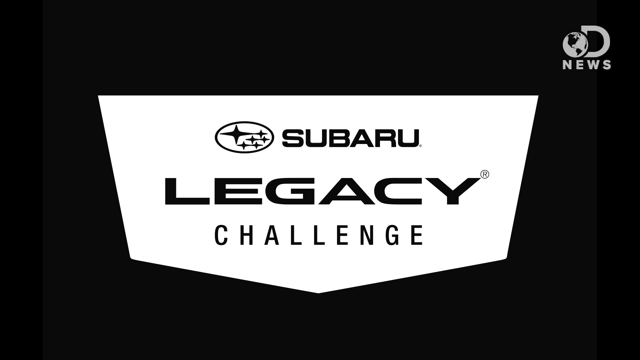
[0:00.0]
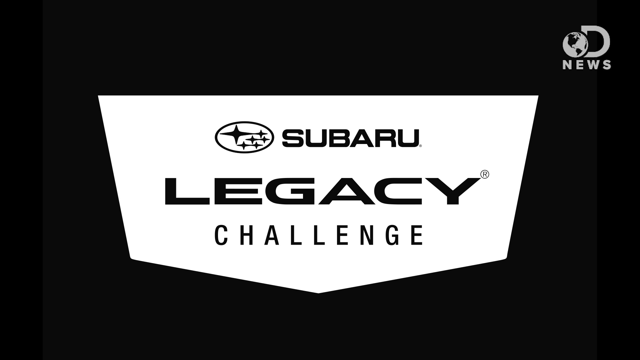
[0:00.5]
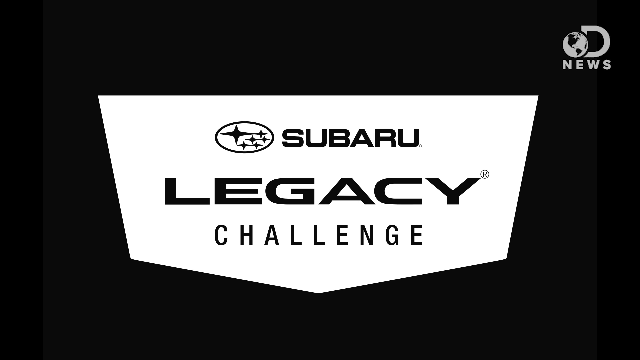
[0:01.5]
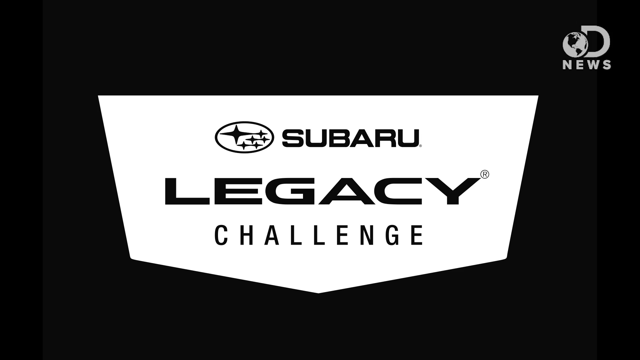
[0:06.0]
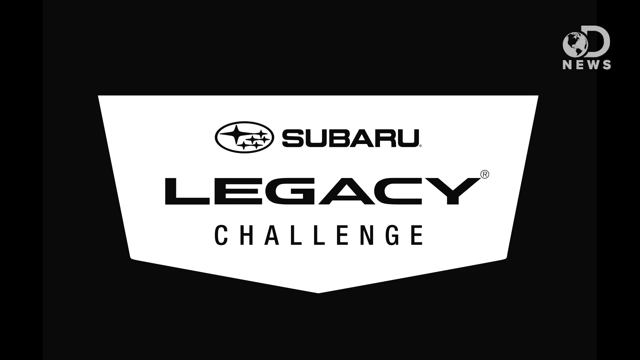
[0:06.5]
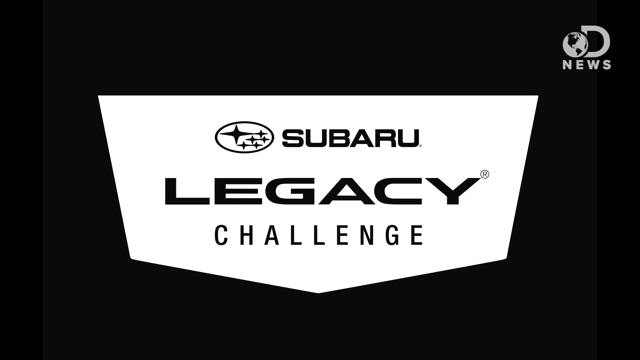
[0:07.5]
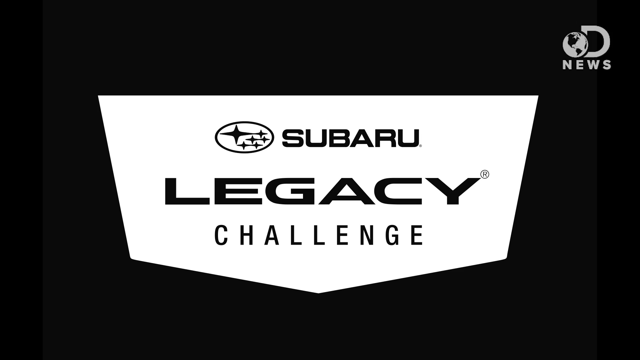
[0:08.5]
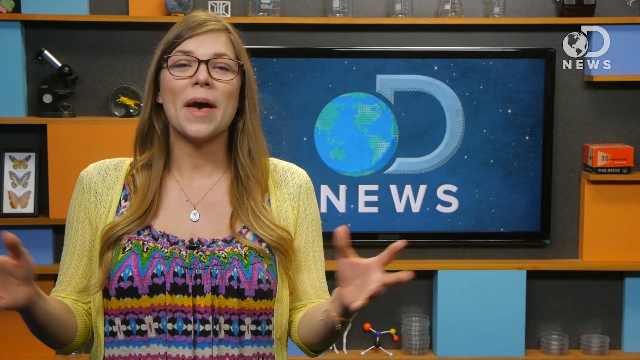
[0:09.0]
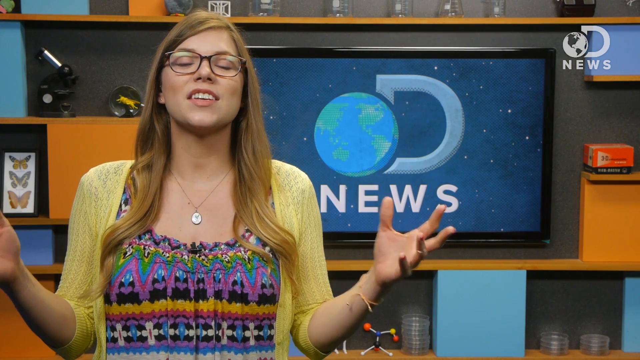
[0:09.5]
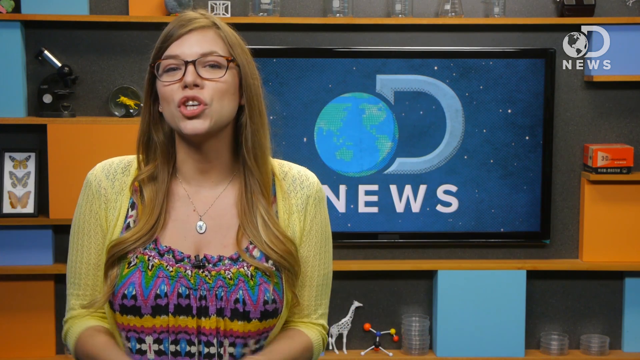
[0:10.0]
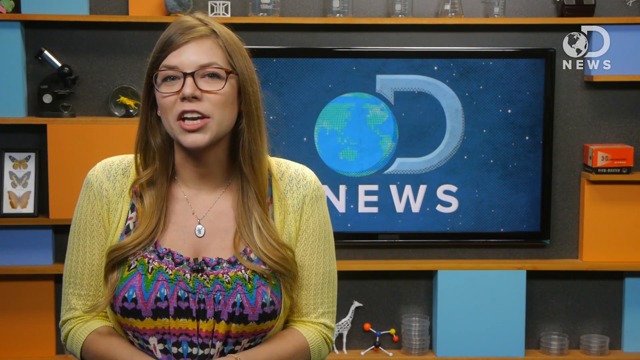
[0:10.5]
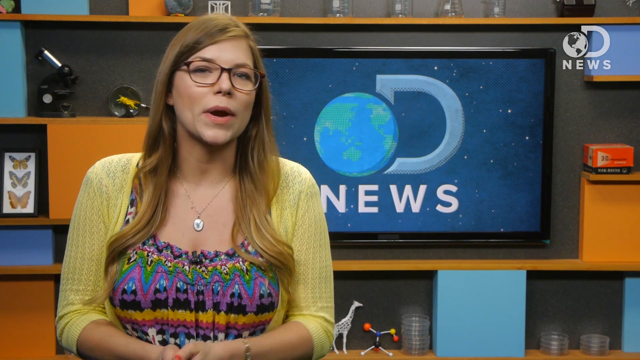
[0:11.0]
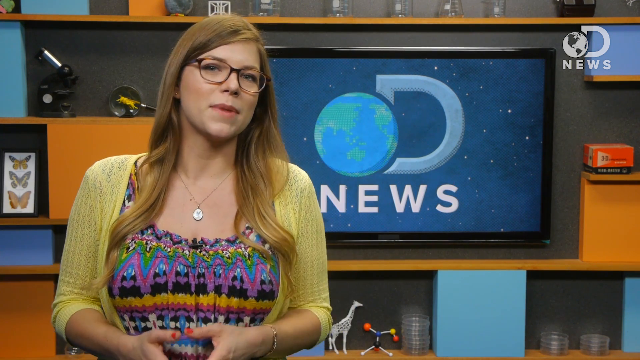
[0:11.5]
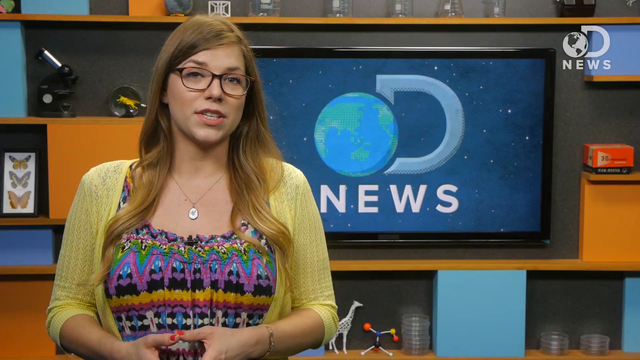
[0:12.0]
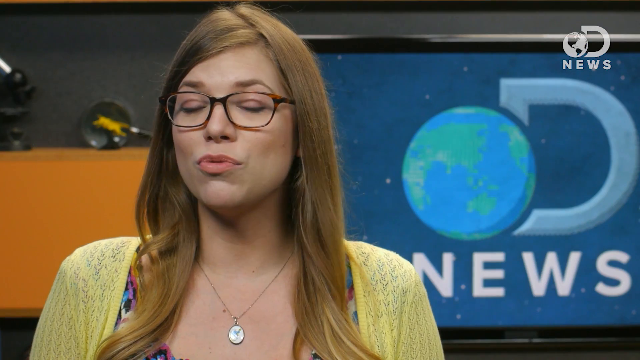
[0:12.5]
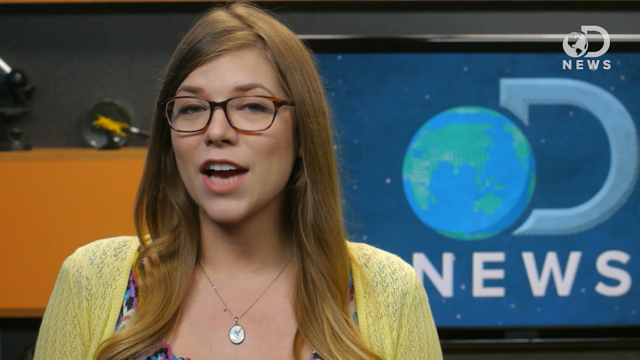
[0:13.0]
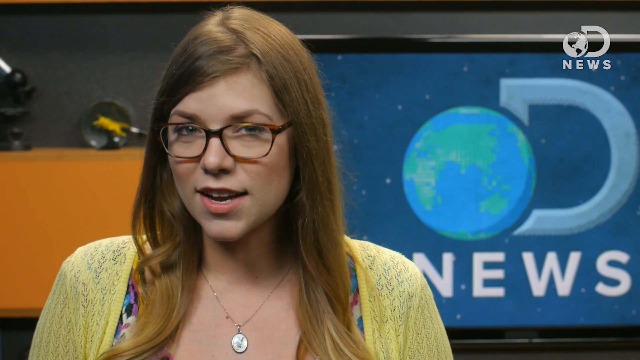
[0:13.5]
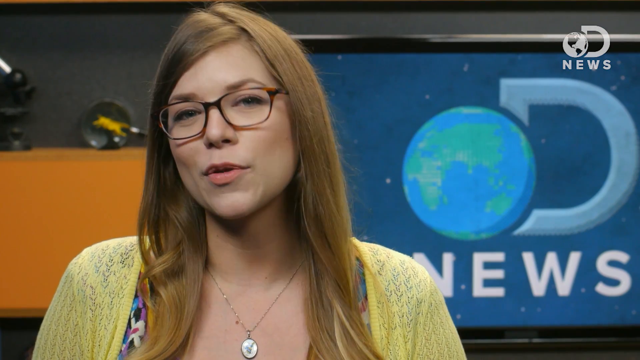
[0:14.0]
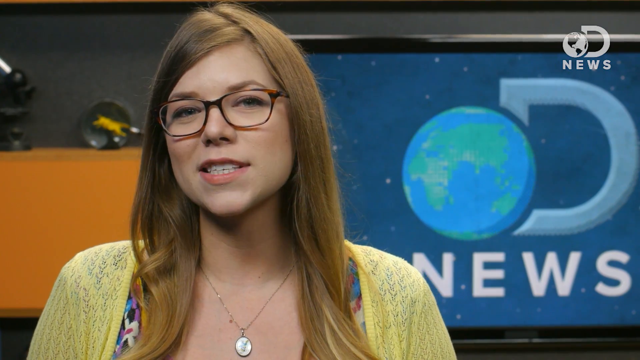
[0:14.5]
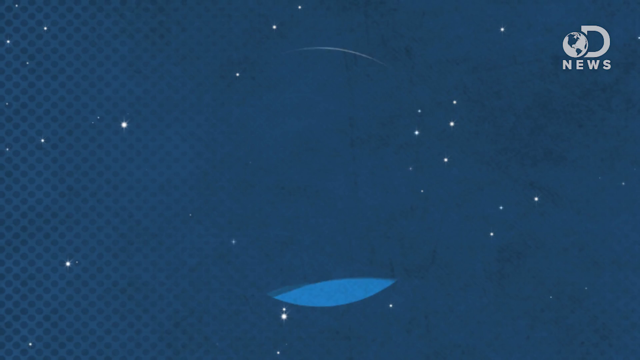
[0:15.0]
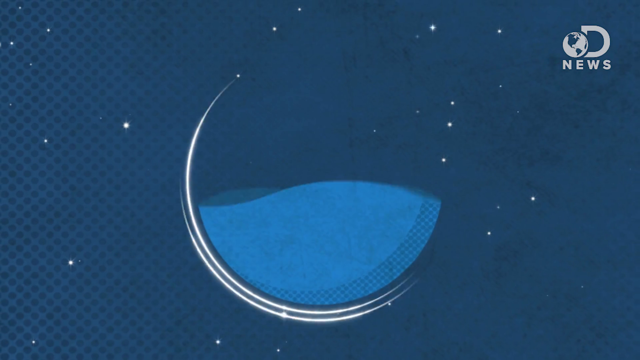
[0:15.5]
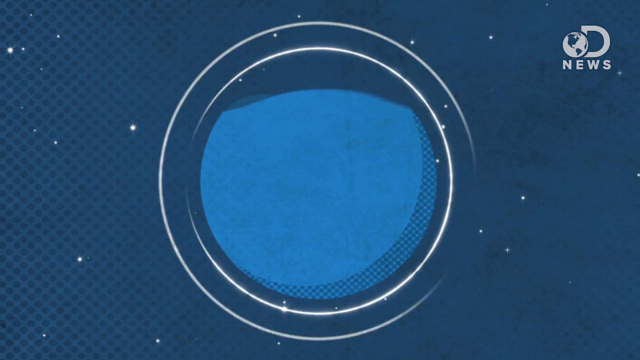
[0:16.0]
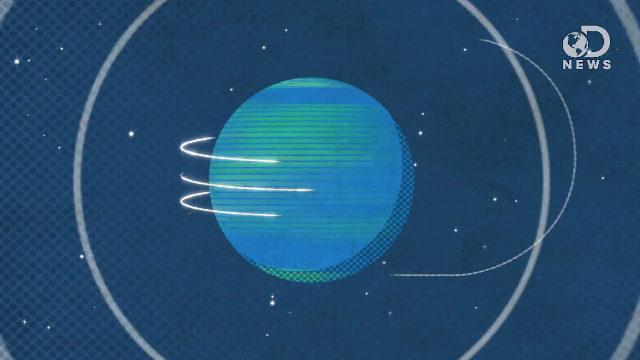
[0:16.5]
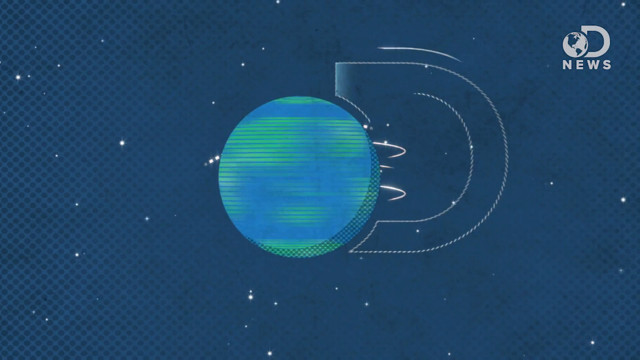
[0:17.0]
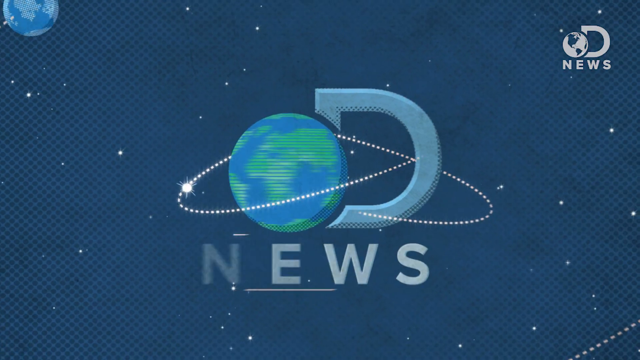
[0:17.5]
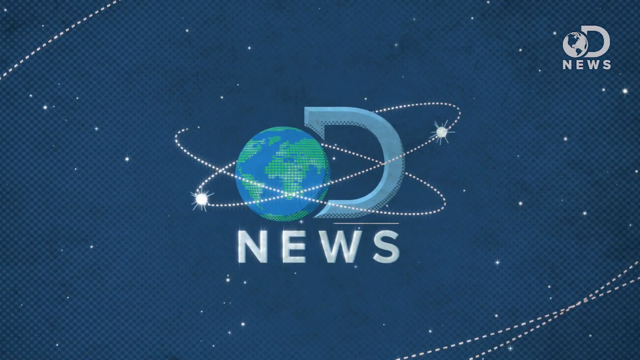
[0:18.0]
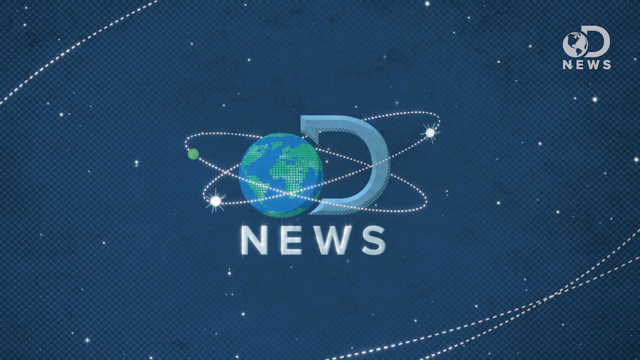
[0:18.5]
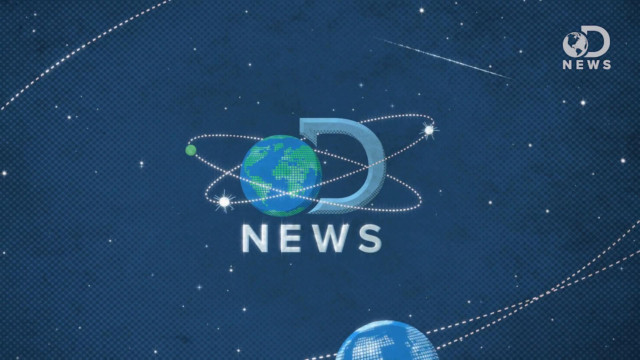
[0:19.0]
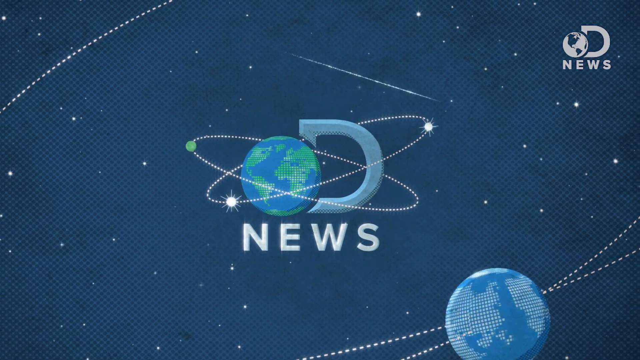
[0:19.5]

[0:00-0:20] The video is from D News. A woman with long brown hair and brown-rimmed glasses talks, using her hands a little as she speaks. The video cuts to a page that says "D News" with Earth in front of it. Butterflies and a microscope are in the background. She wears a silver necklace and a very colorful dress with a sweater over it; the sweater is kind of a mustard yellow, and the dress underneath has purple, yellow and other colored zigzag stripes. She talks with both of her hands and arms. A TV screen in the background shows the Earth, then a "D" and then "News". For the introduction, the Earth spins and planets spin around it.